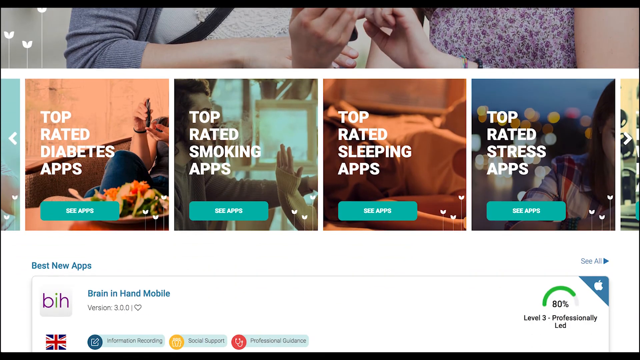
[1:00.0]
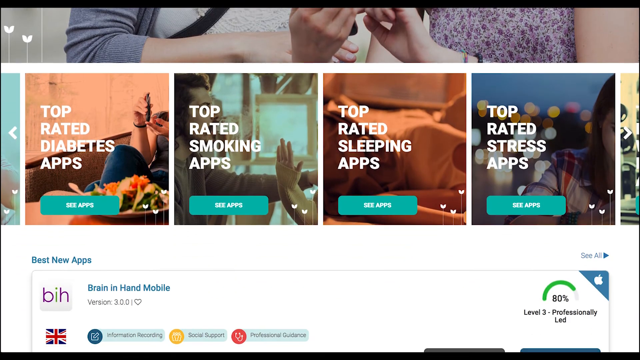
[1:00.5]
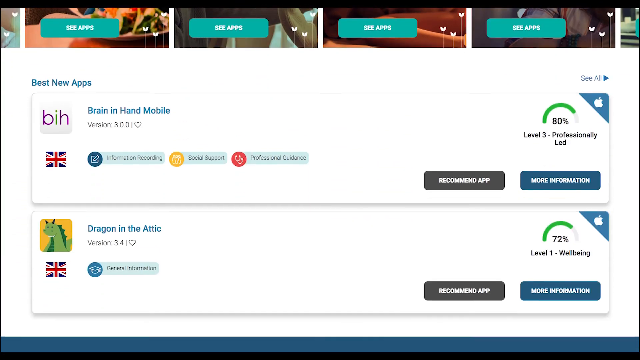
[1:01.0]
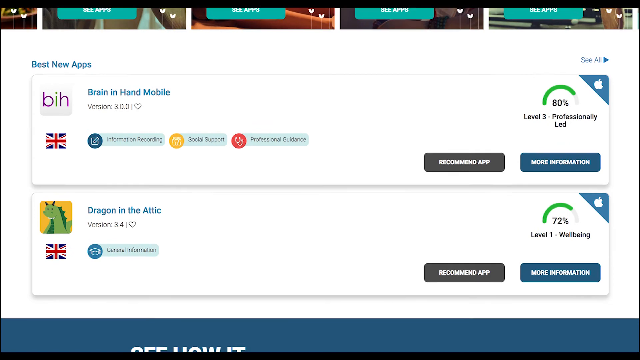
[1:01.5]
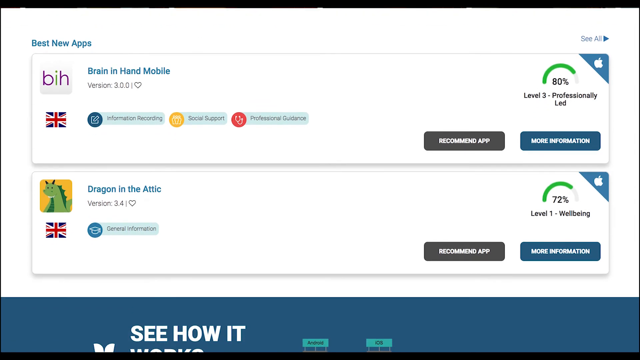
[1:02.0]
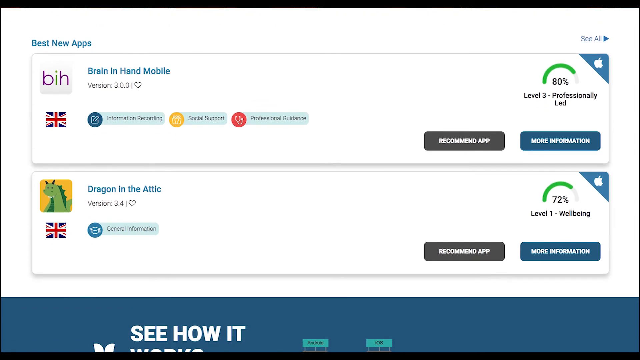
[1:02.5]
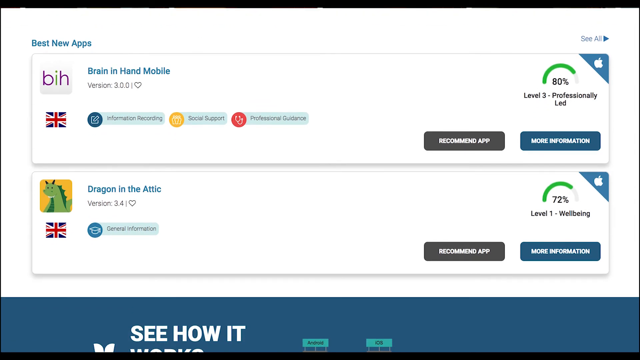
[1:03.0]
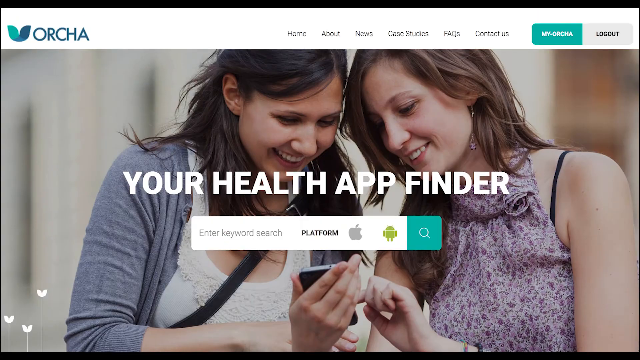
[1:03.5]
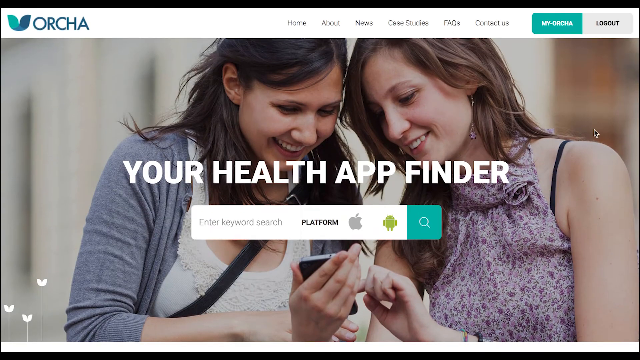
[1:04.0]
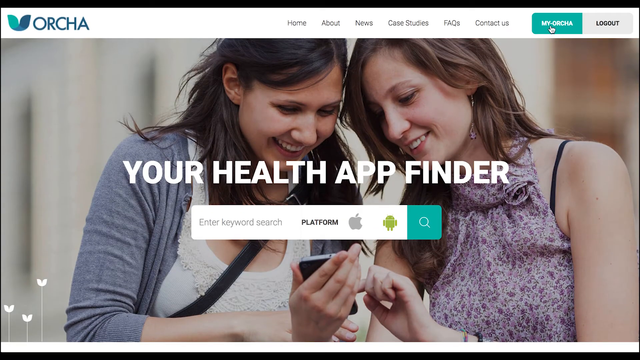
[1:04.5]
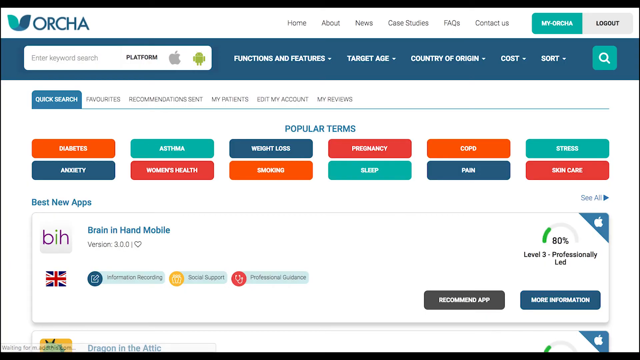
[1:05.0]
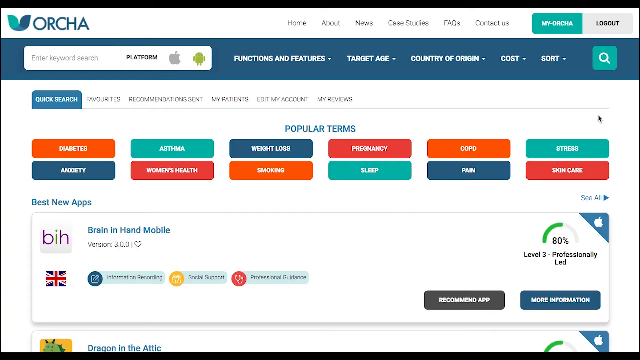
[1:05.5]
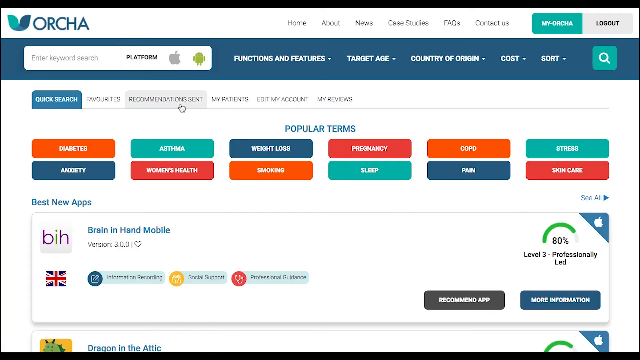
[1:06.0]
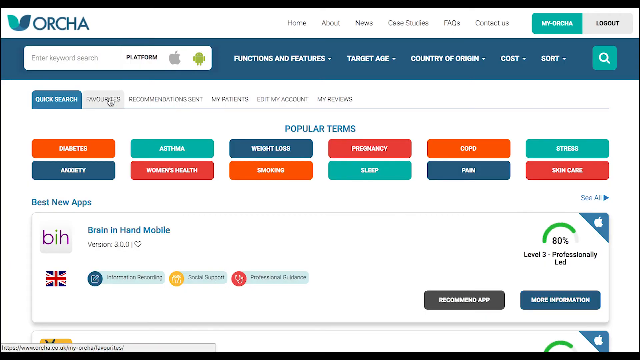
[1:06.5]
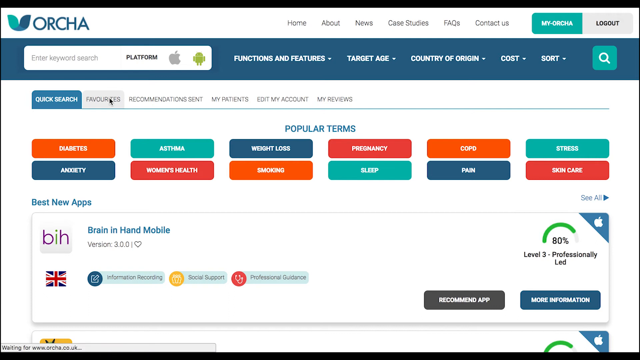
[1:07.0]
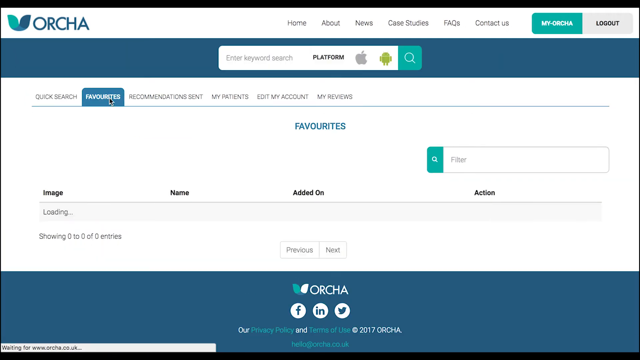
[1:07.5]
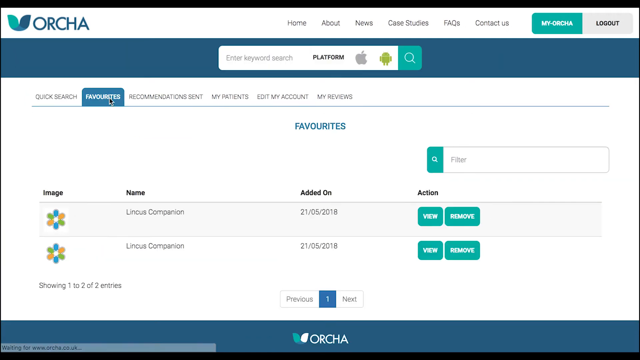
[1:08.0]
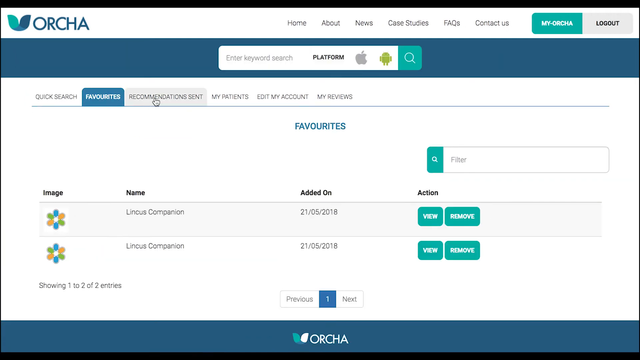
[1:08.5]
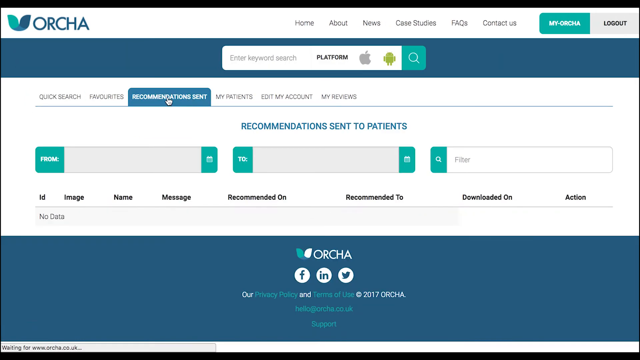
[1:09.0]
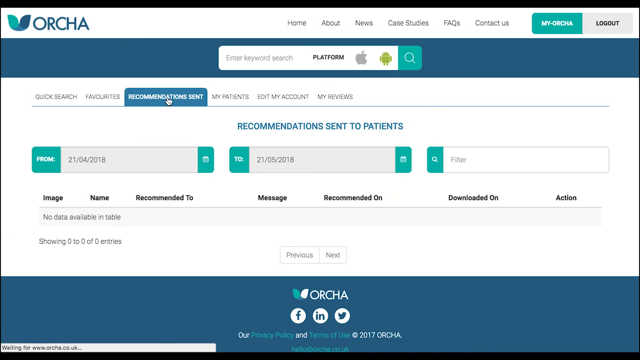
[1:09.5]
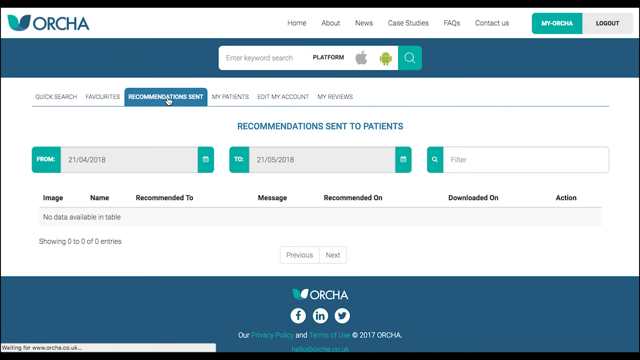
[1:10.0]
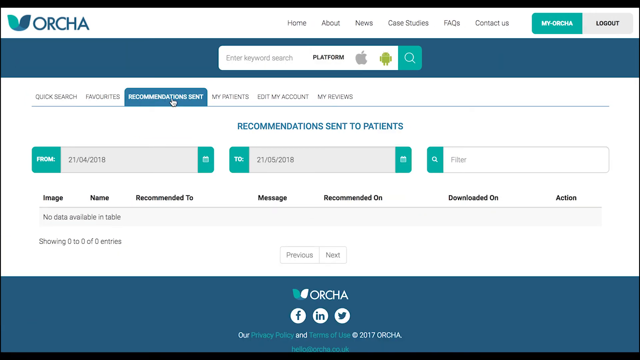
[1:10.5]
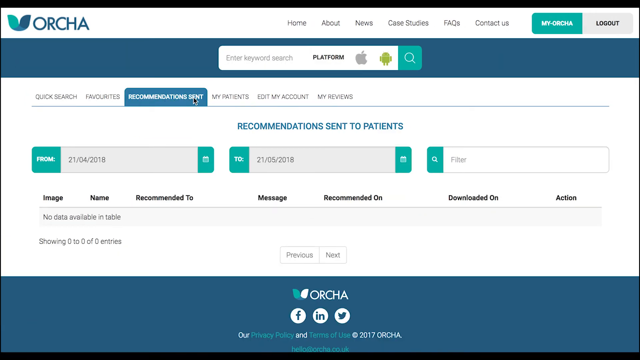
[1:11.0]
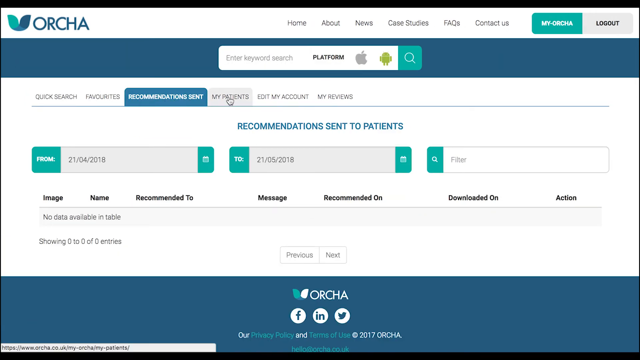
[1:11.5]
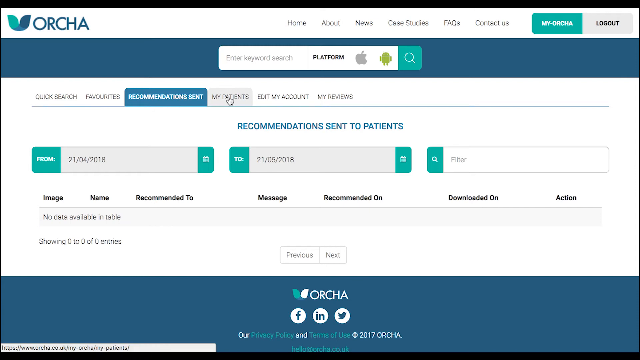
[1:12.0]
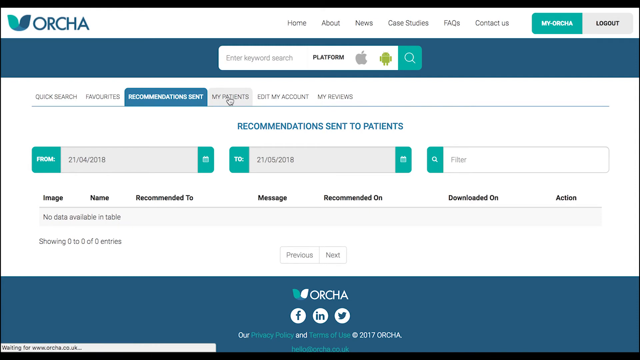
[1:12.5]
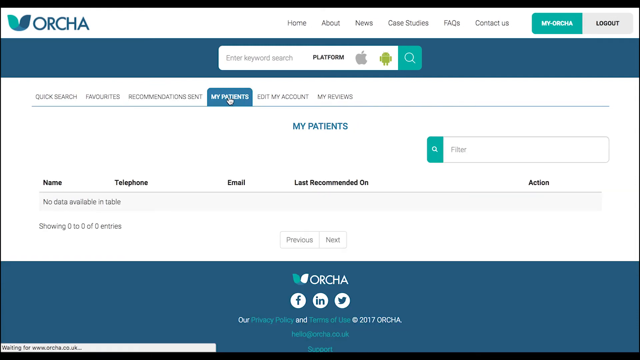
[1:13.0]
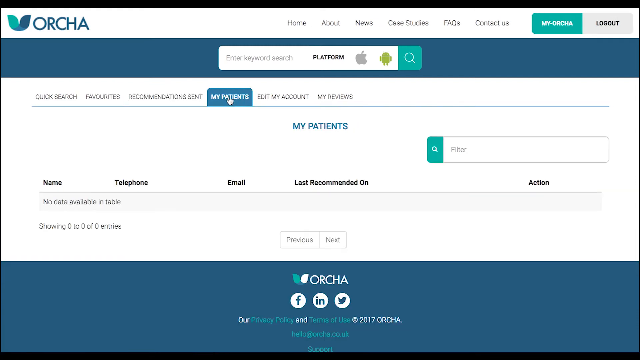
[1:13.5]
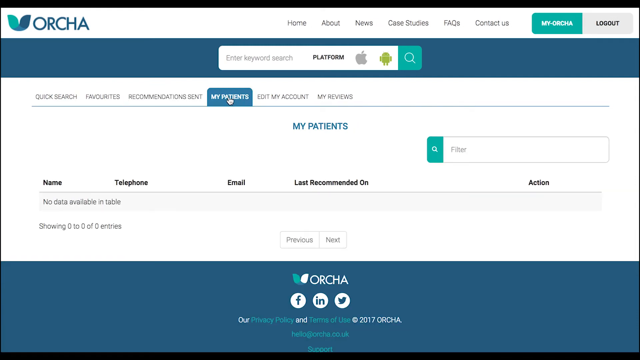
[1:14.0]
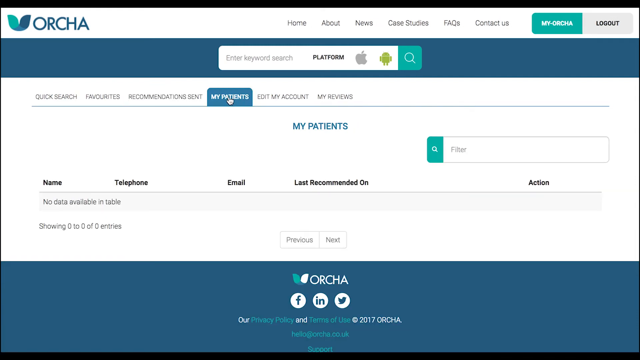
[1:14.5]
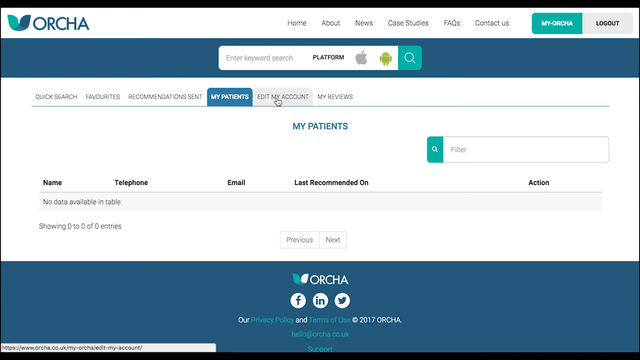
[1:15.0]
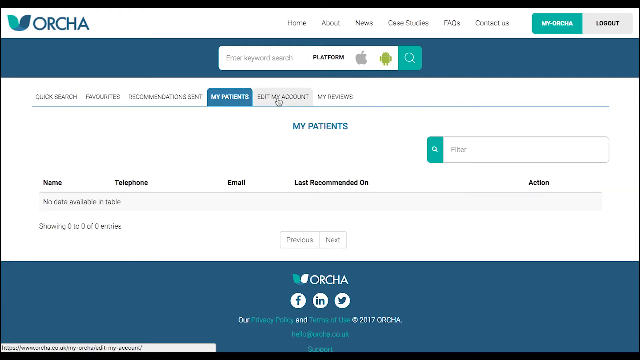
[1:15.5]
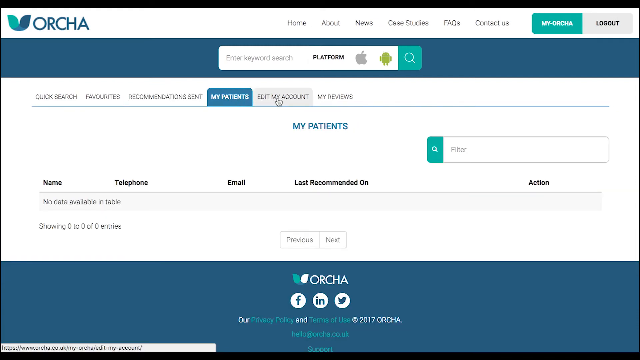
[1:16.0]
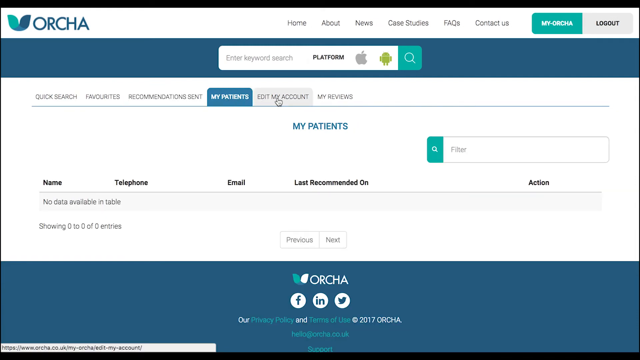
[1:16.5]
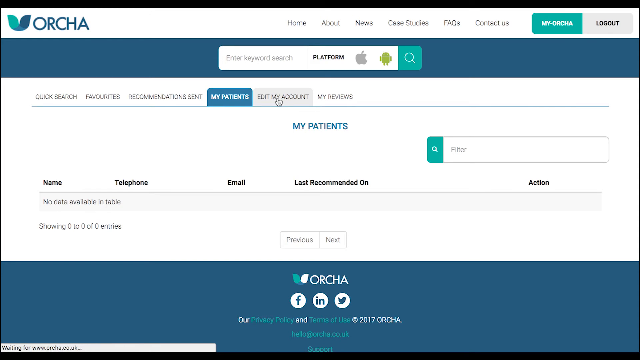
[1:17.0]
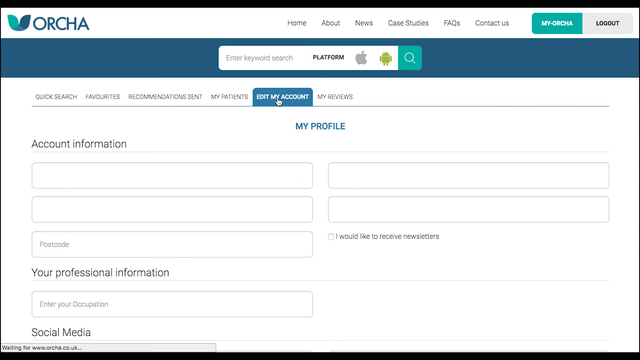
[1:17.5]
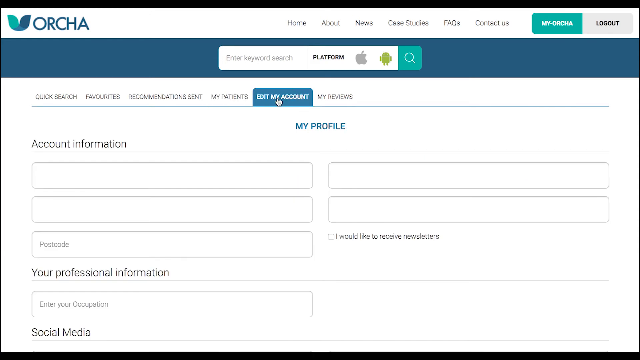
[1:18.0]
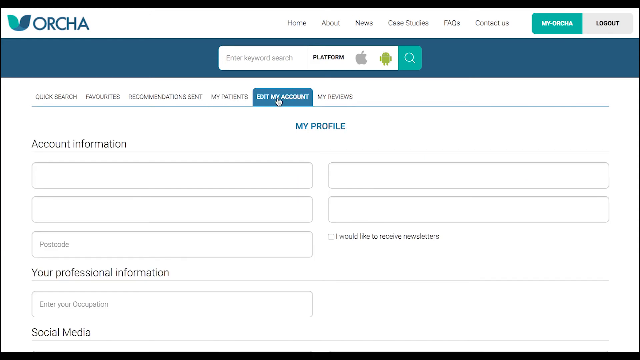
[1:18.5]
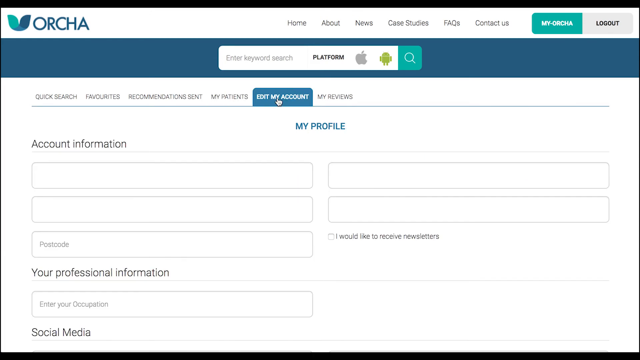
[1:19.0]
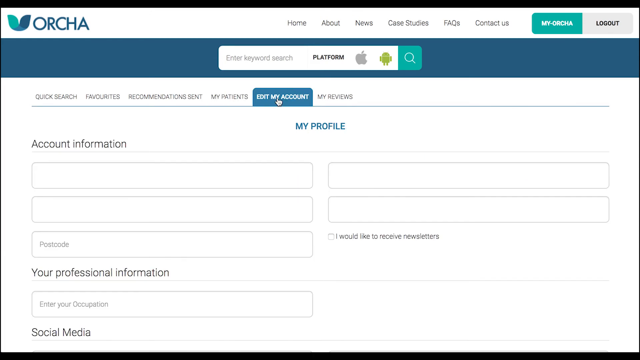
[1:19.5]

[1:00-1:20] The user scrolls down the list of apps, quickly scrolls back up, and clicks on a Favourites tab, then a Recommendations Sent tab, then My Patients, then edit my account. The movements remain quick but appear to slow down a little compared to before. Visible sections of the website include "top rated diabetes apps" with a button reading "see apps", "top rated smoking apps" with an option to see those apps, "top rated sleeping apps" and "top rated stress apps". More are available, but the user does not click the arrow to extend the options. The website's main colour theme is white and blue.